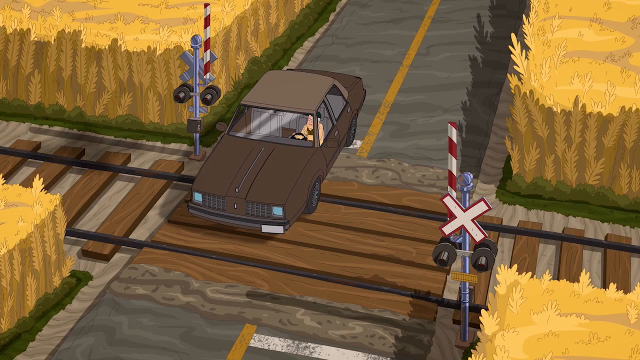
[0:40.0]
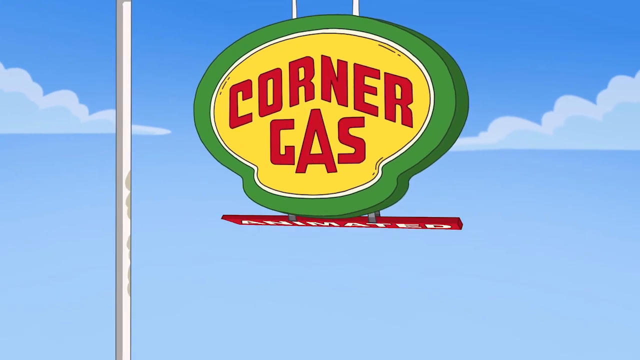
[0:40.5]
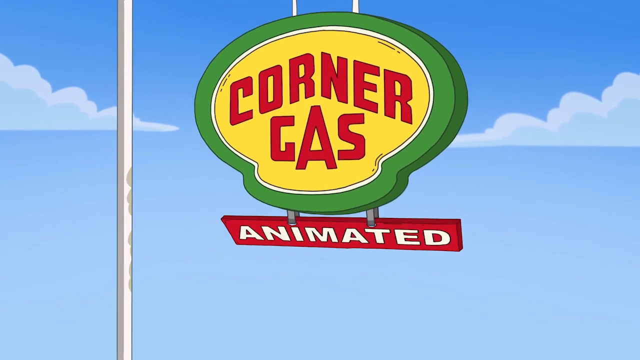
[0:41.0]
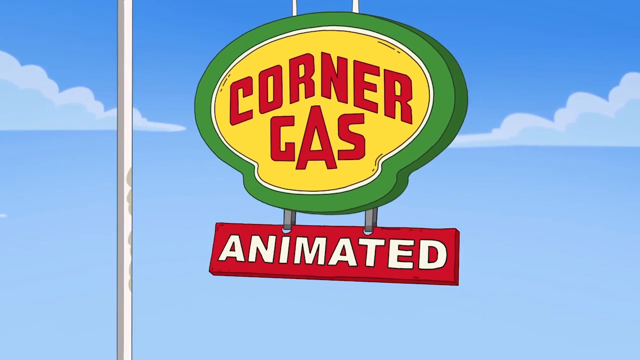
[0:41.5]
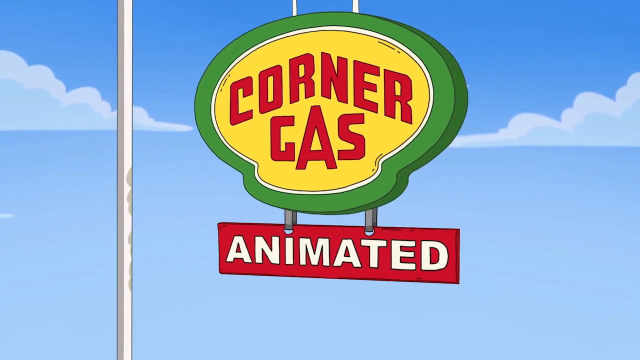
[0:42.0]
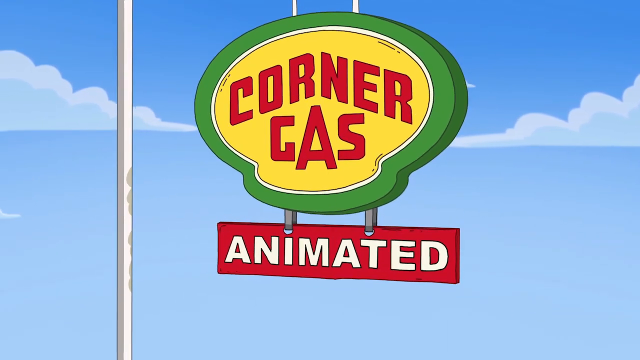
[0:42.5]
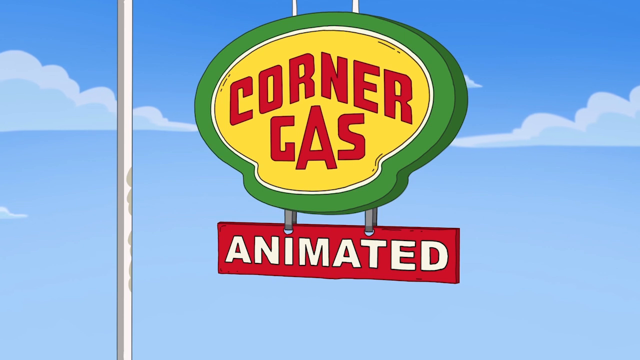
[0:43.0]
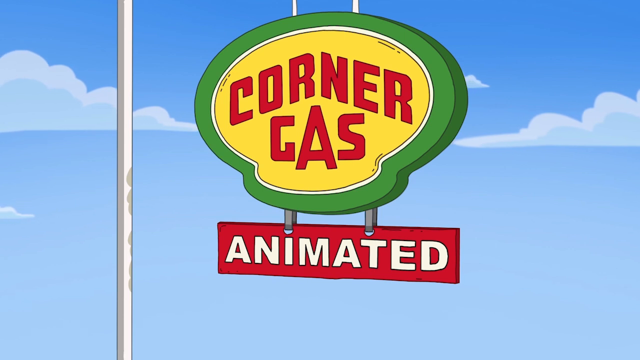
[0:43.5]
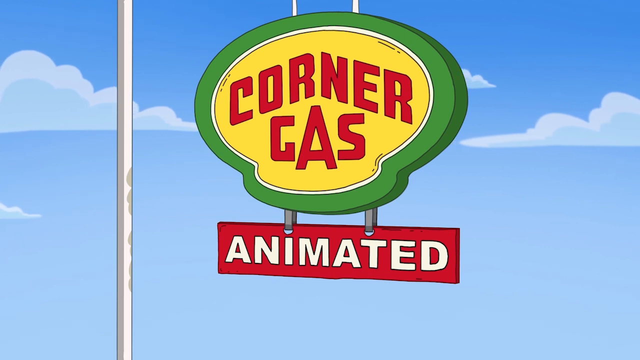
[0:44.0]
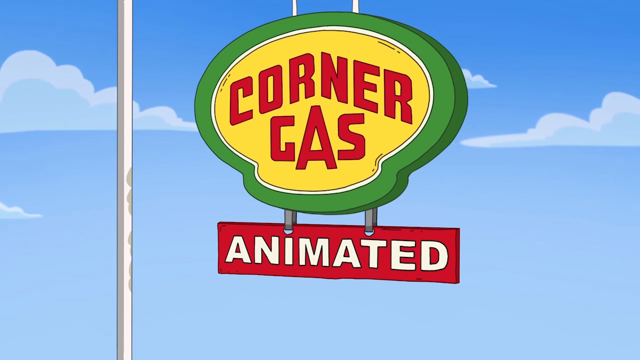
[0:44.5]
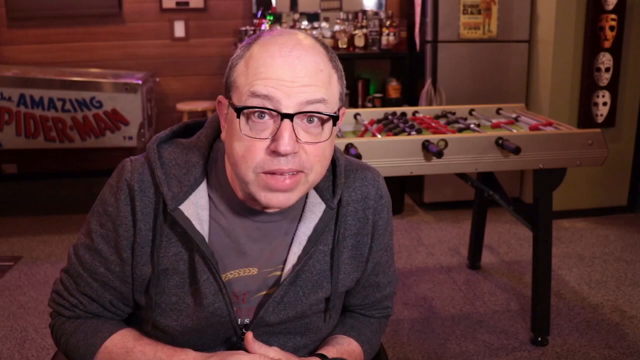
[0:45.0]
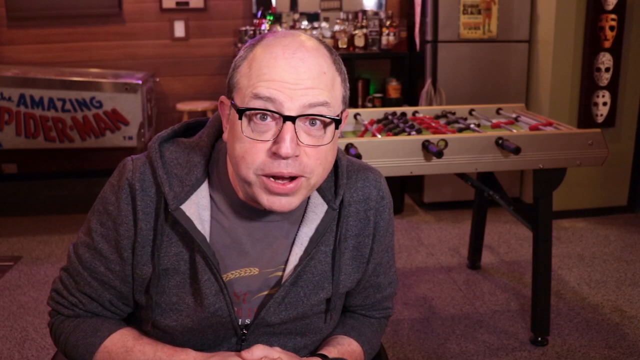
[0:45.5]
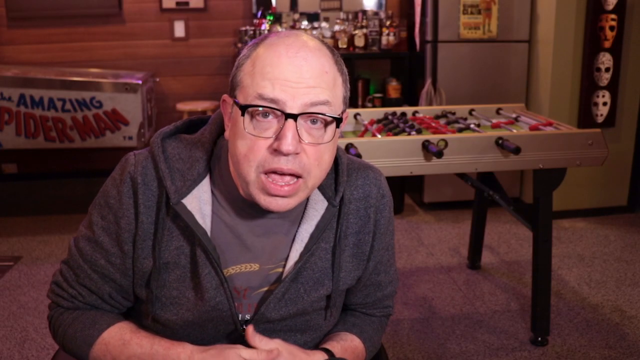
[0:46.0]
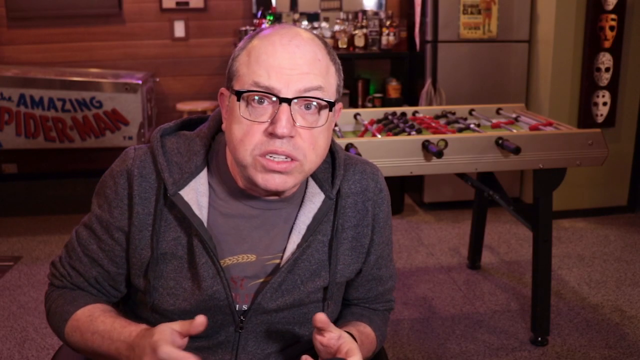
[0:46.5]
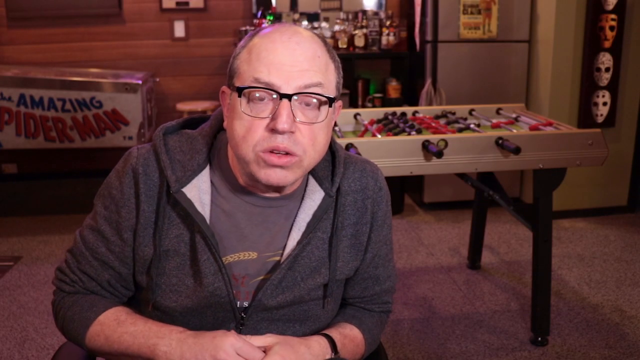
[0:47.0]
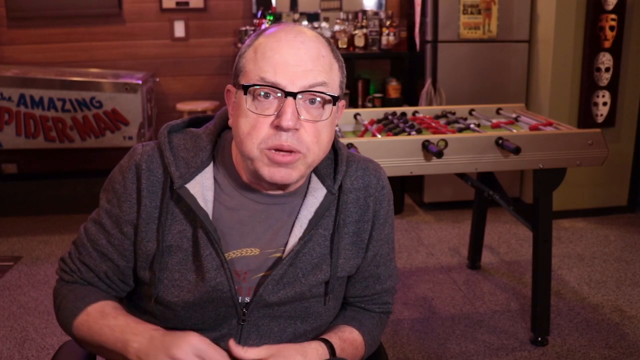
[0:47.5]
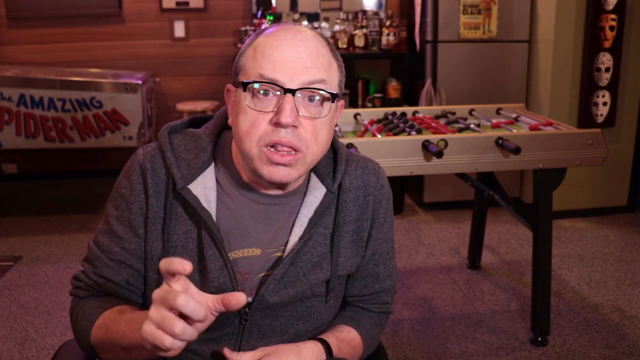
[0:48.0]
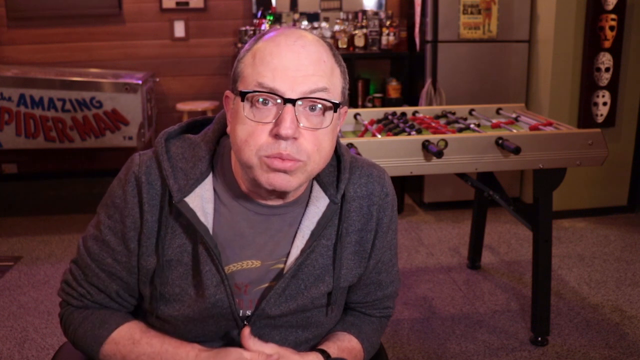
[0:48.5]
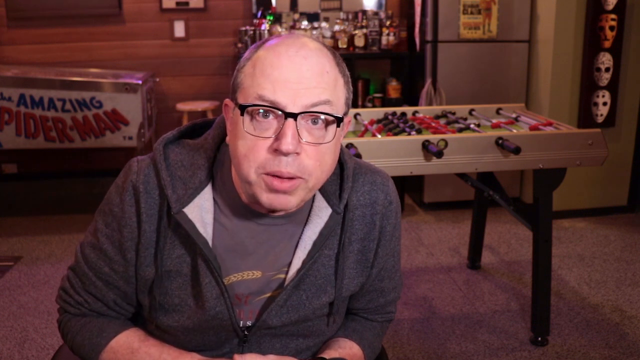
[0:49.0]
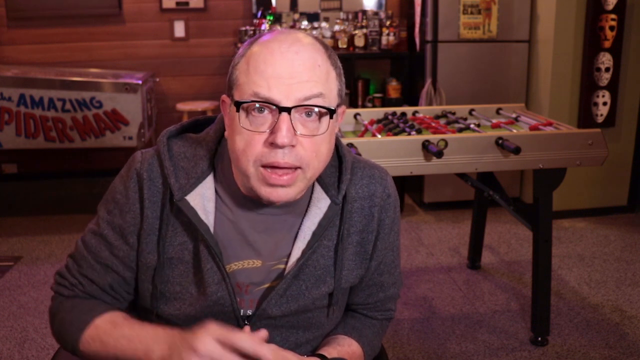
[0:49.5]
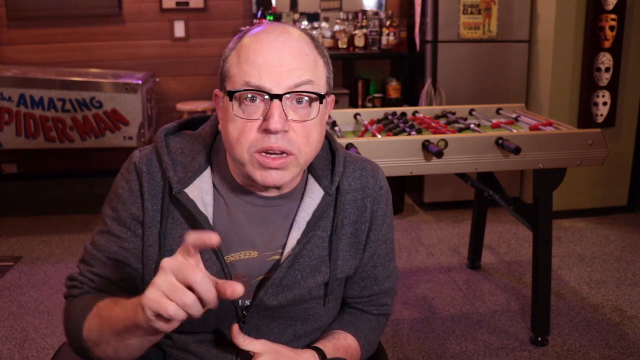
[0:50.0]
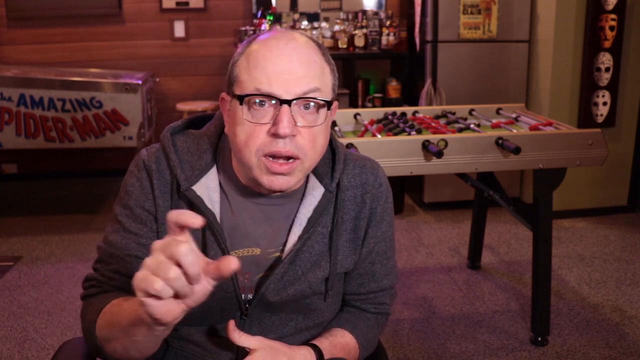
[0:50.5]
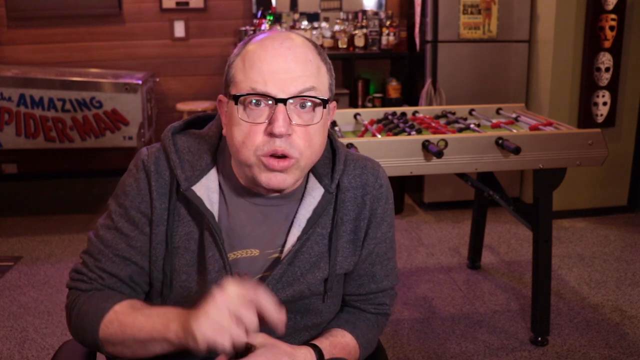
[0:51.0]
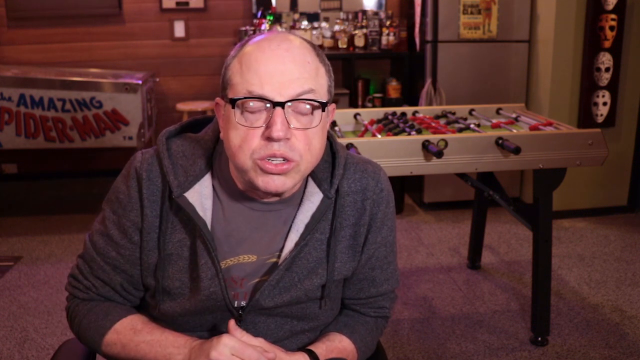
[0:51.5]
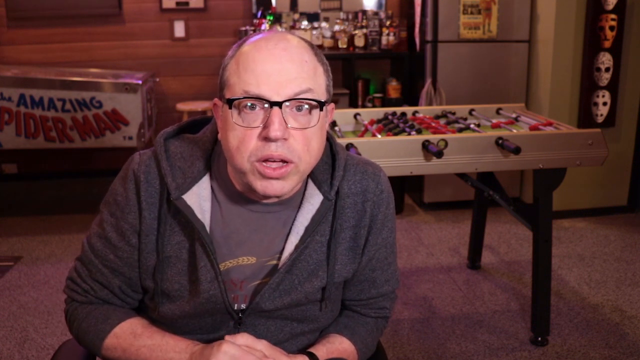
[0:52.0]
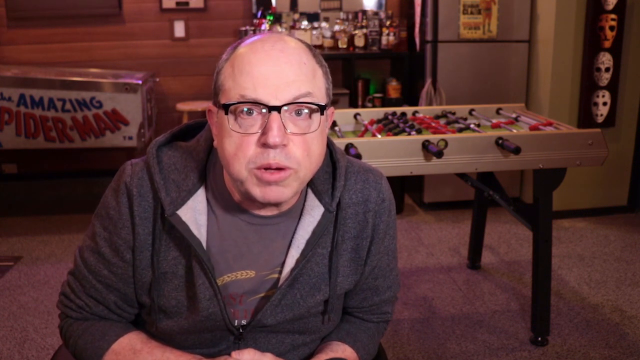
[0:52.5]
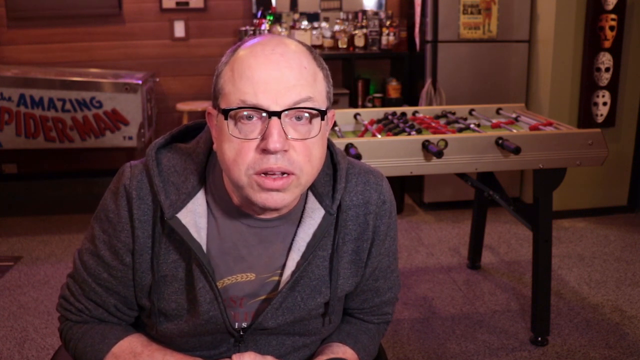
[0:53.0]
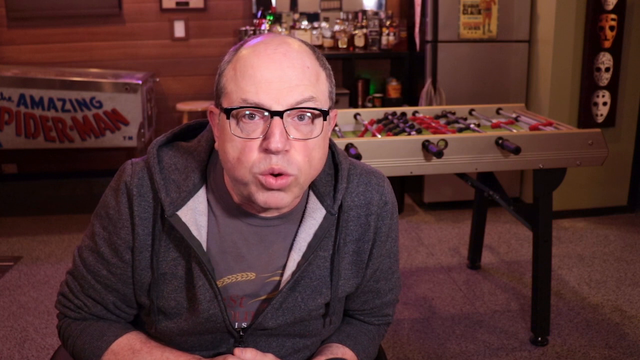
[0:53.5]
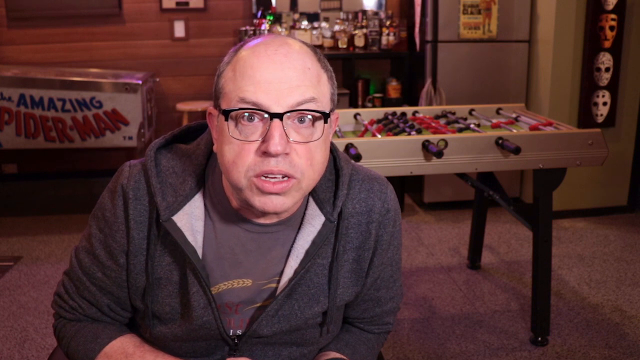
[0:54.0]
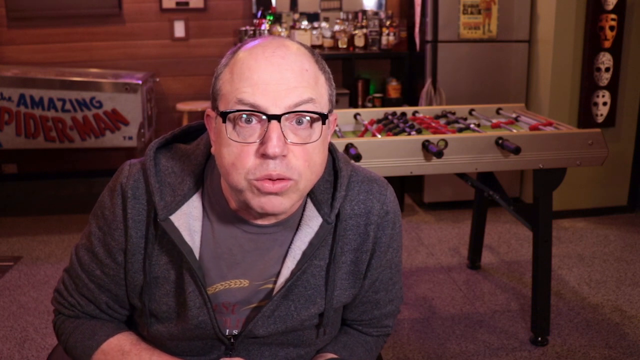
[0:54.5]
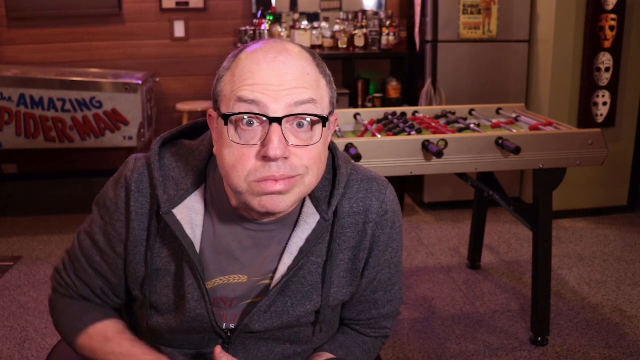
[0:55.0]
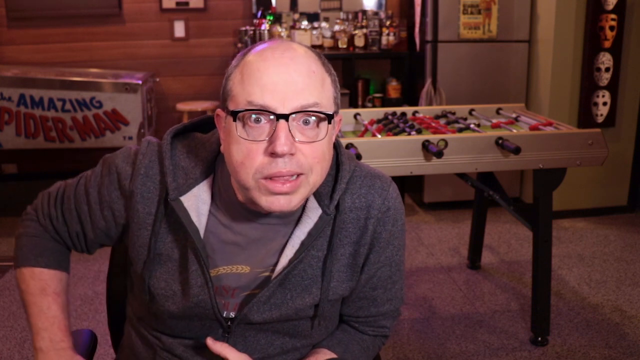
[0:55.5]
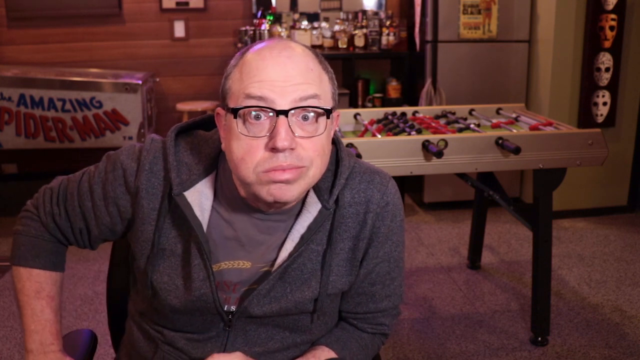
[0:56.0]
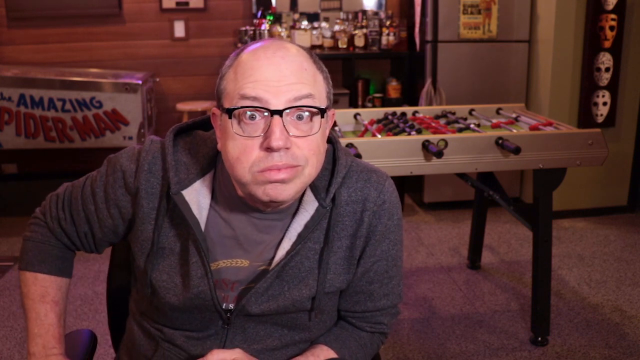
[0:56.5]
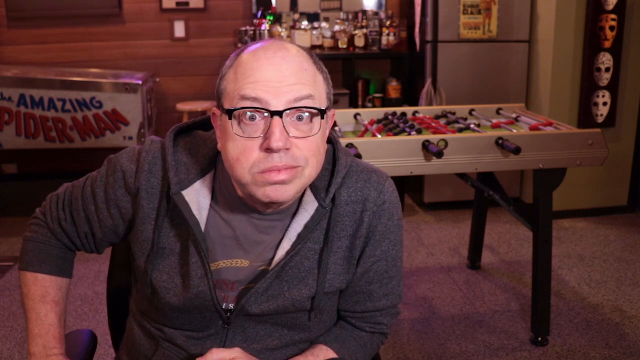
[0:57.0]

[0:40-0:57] An animated car stops on train tracks surrounded by fields of wheat. The man in the car looks up at the sky as the shadow of something passes over him. The scene cuts to an animated sign reading "Corner Gas Animated": the words "Corner Gas" are on one part of the sign, and the word "Animated" hangs down below it, dangling as if in the wind or as if added onto the original sign. Then a real image shows a man sitting in a room with a foosball table behind him and a pinball machine. He wears a grey hoodie, a brown shirt and black-rimmed glasses. He looks at the camera and talks towards it, making gestures with his fingers, and towards the end raises his eyebrows while shrugging his shoulders.